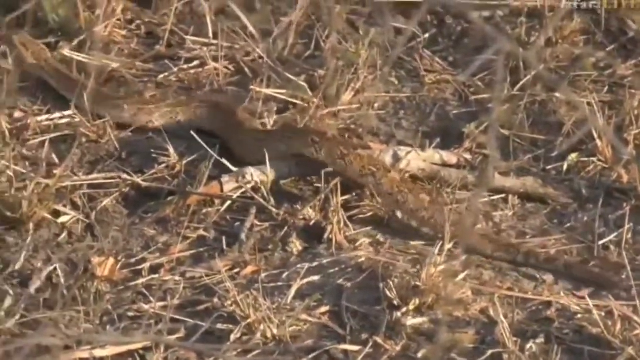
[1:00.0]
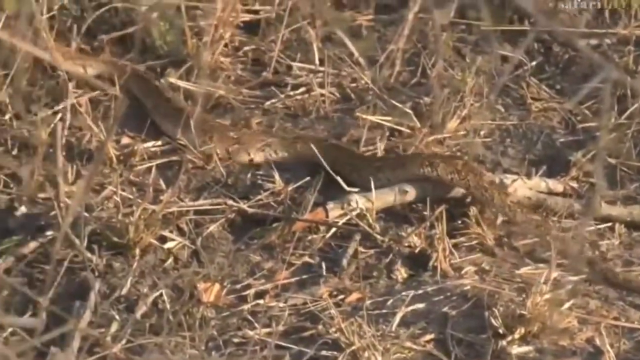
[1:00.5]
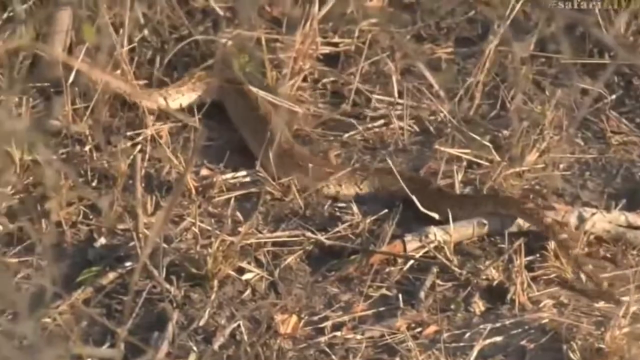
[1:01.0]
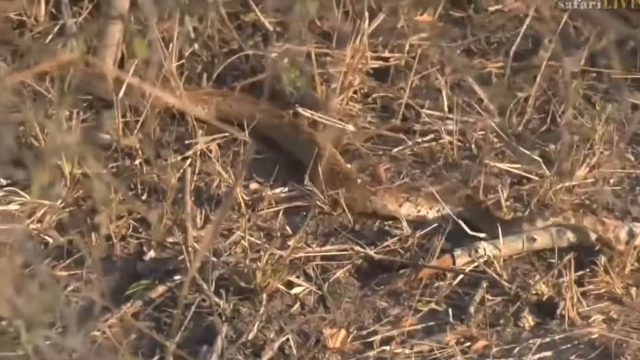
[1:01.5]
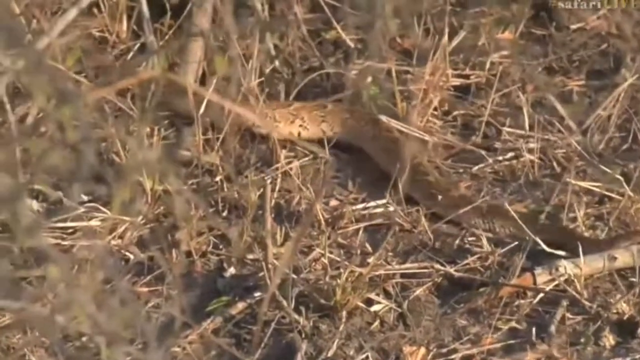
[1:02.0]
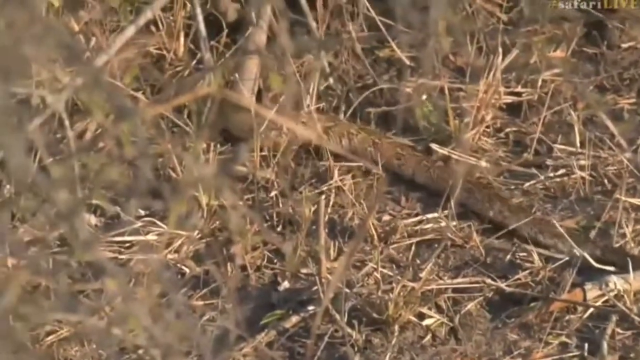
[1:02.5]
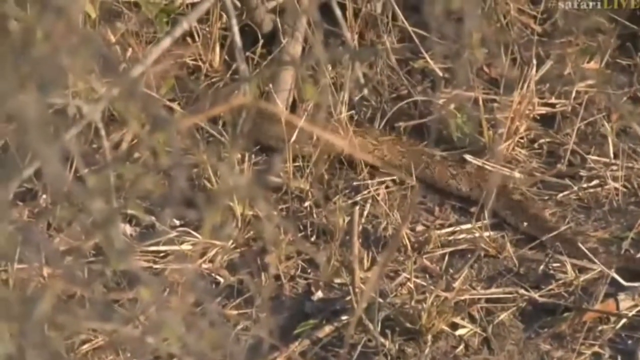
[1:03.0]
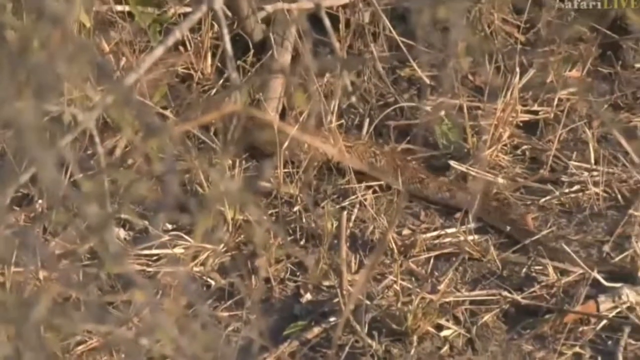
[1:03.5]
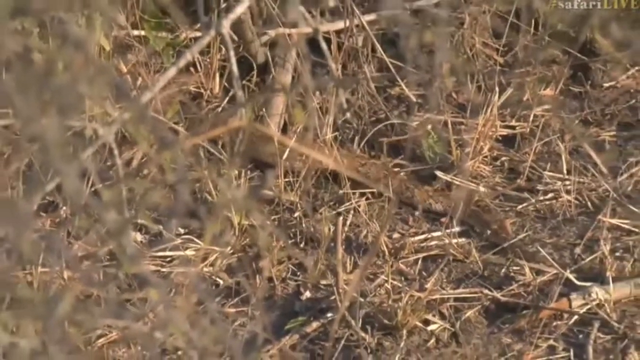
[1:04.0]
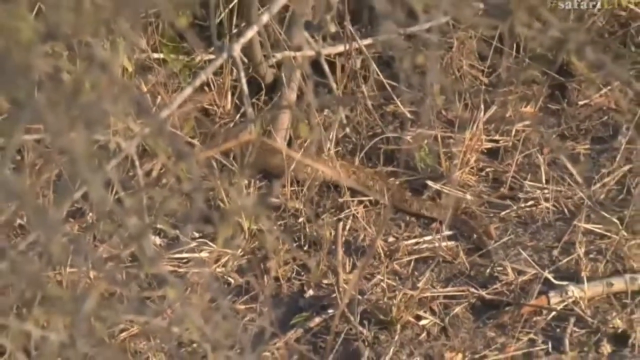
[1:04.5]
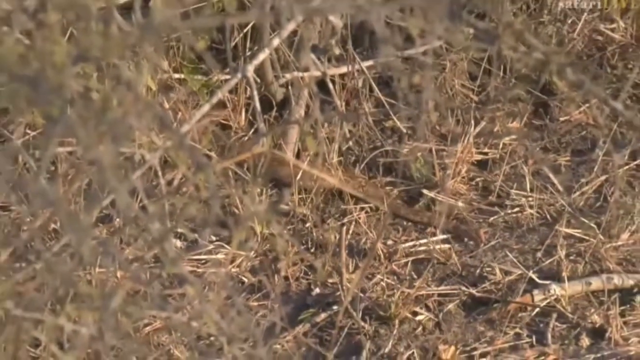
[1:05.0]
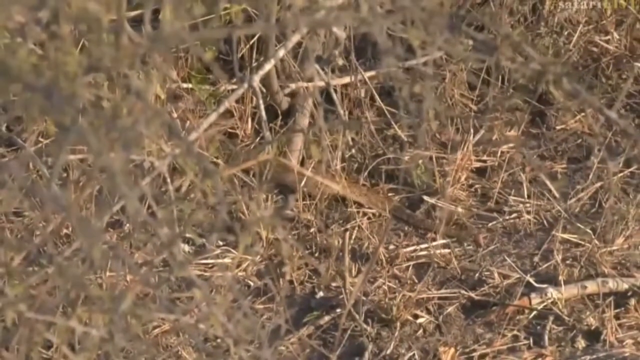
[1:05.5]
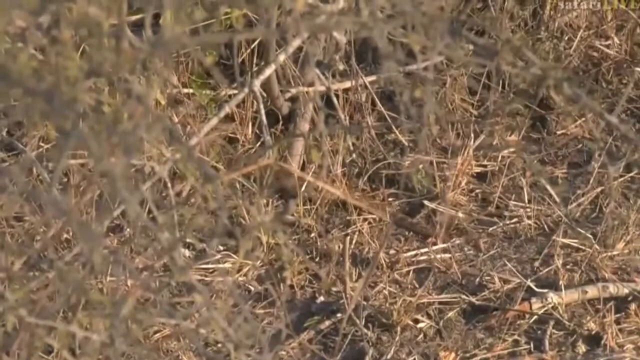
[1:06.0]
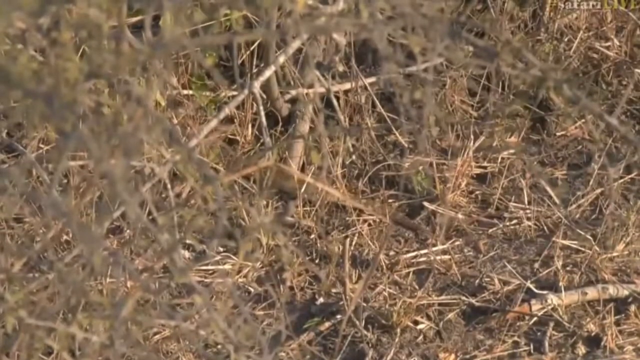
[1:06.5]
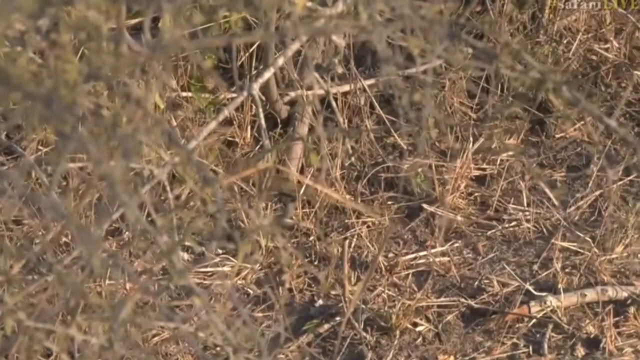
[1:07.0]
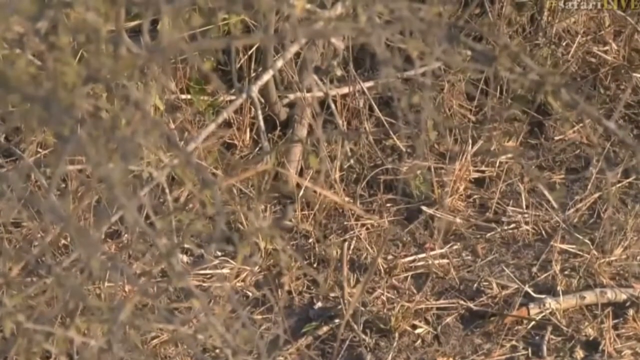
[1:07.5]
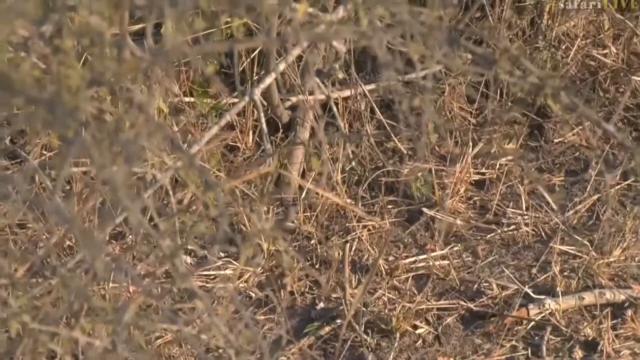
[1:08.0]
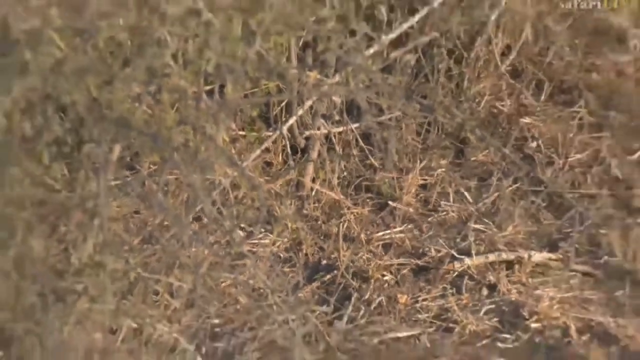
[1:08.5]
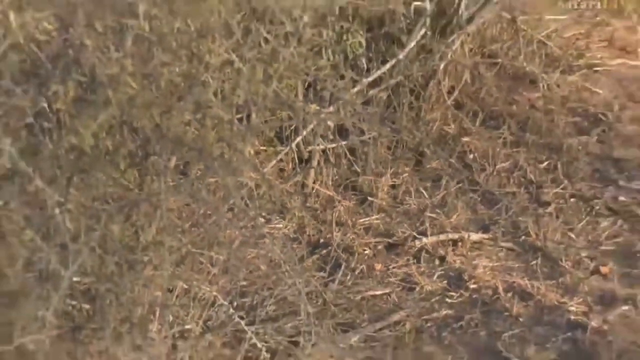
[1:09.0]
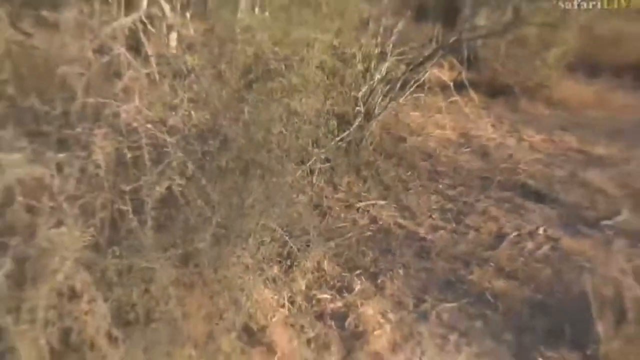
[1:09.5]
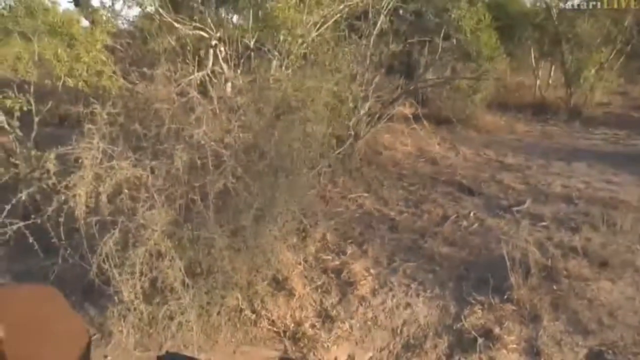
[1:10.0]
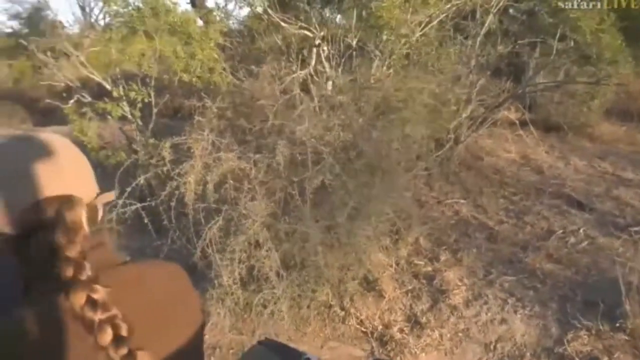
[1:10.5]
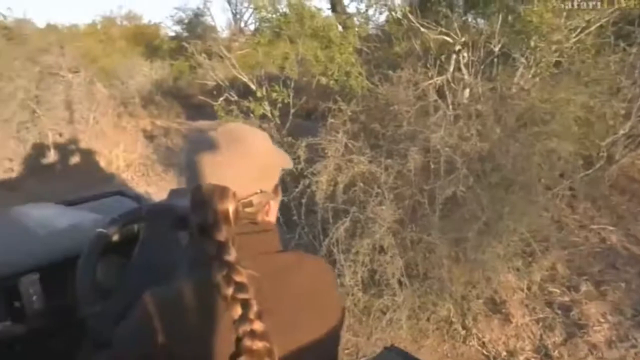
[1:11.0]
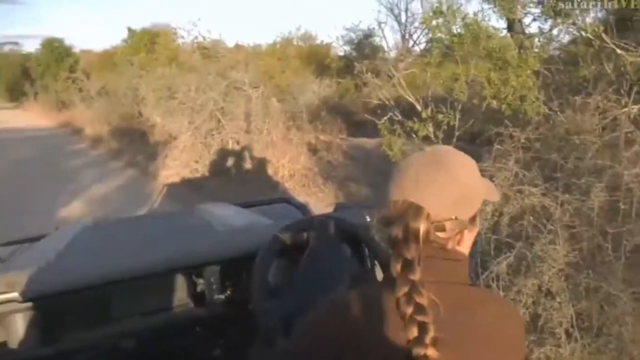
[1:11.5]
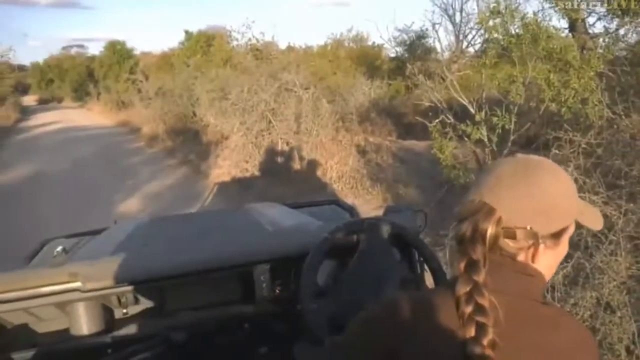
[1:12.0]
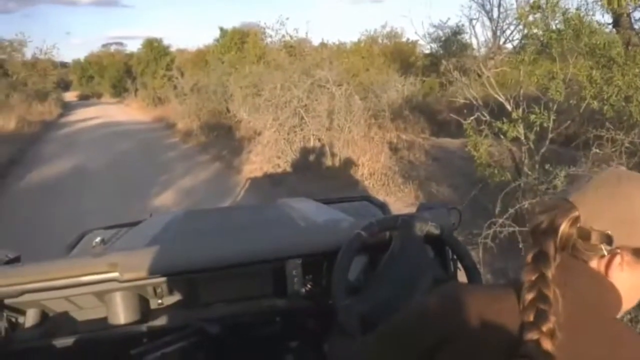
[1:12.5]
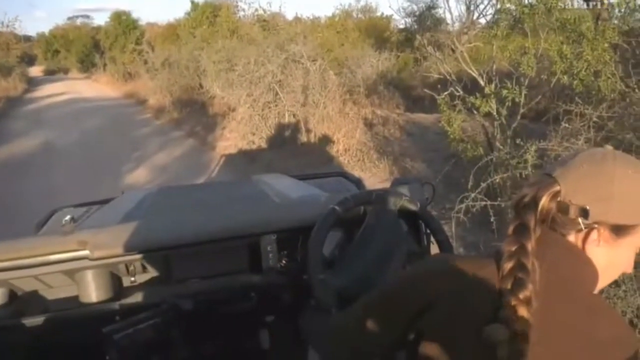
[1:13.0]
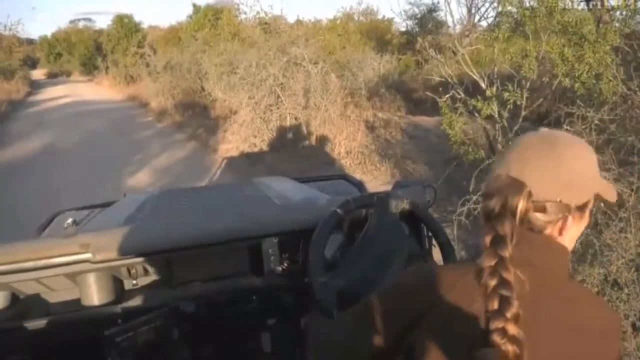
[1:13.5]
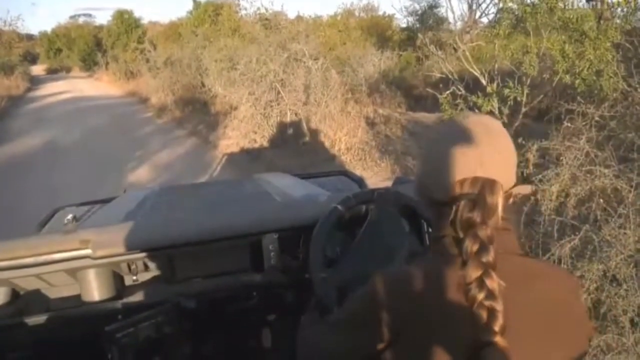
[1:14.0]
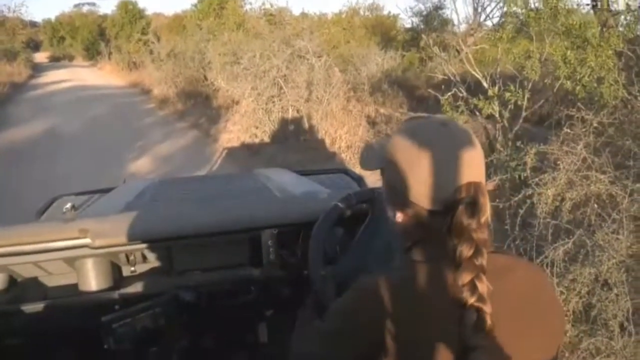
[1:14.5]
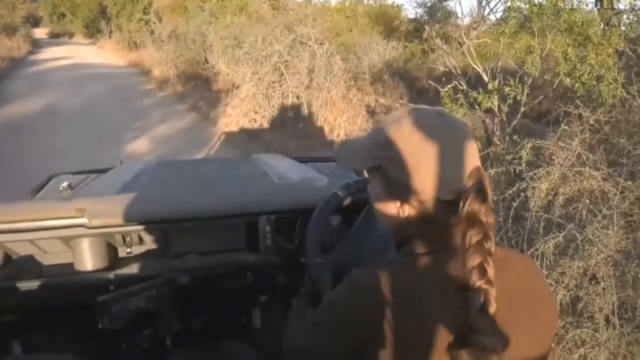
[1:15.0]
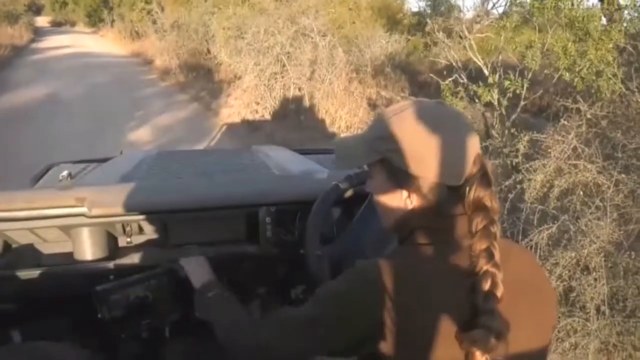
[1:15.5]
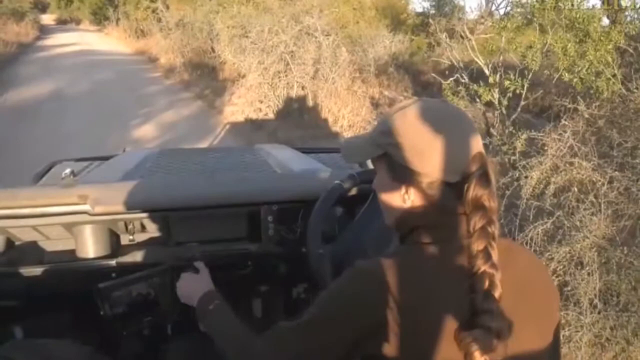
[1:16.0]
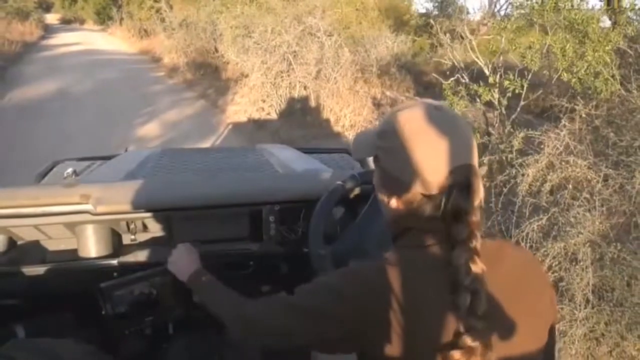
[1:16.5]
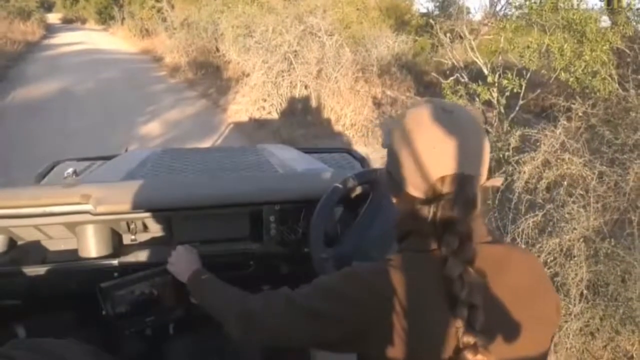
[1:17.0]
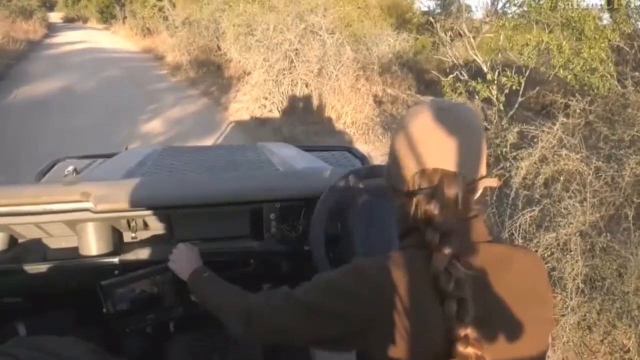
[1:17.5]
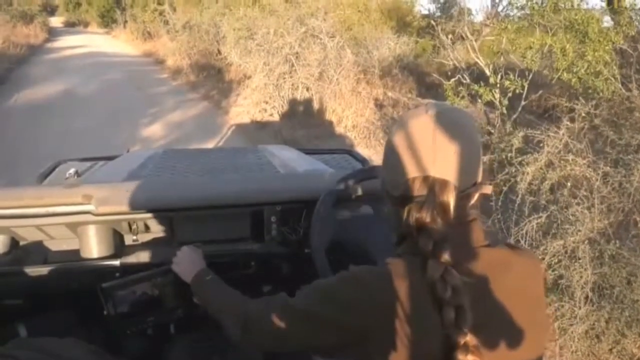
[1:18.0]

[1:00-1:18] The snake continues to slither away with an extremely smooth motion, moving from left to right and back repeatedly, and starts disappearing into some denser bushes. It is hard to tell from this angle whether the grass is longer or whether there are bushes between the camera and the snake. It keeps slithering from the right to the left of the frame until the very end of its tail finally slips out of sight. The camera then zooms back out and pans around to another view of the back of the tour guide's head; she has a braid in her hair. The shadow of the person filming is visible: they are standing up in the back of the Jeep and appear to have a professional camera. The woman driving continues to look at the ground to check that the snake has gone. She looks around, looks behind her and closer to the Jeep until she seems satisfied that it has disappeared. Then she puts the Jeep into gear, turns the steering wheel and begins to drive away.